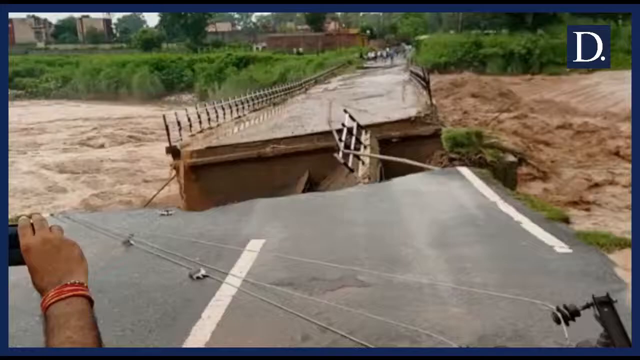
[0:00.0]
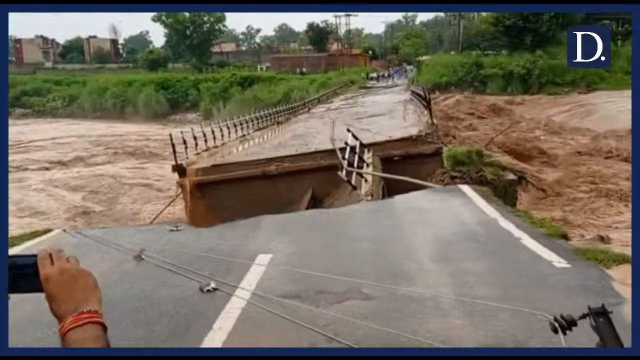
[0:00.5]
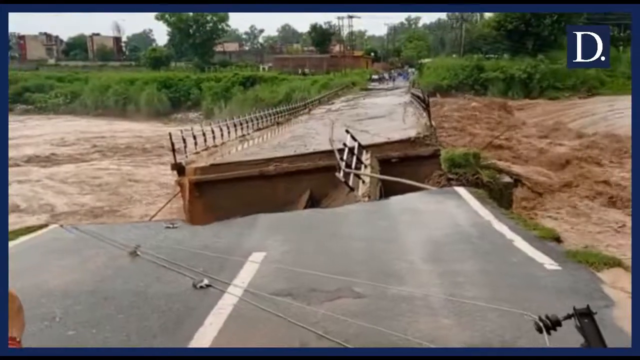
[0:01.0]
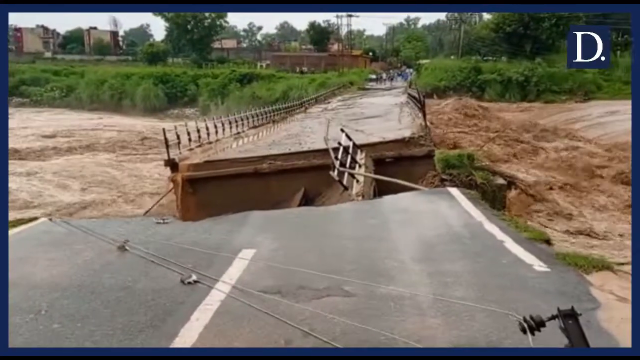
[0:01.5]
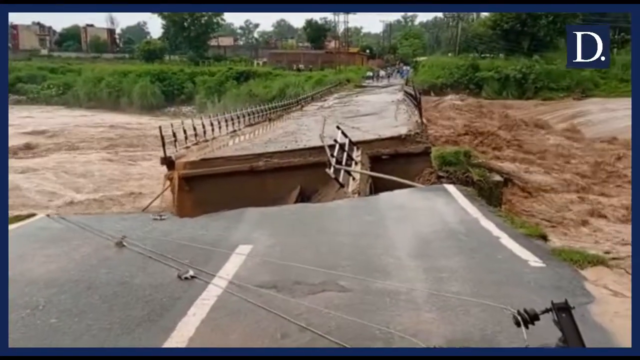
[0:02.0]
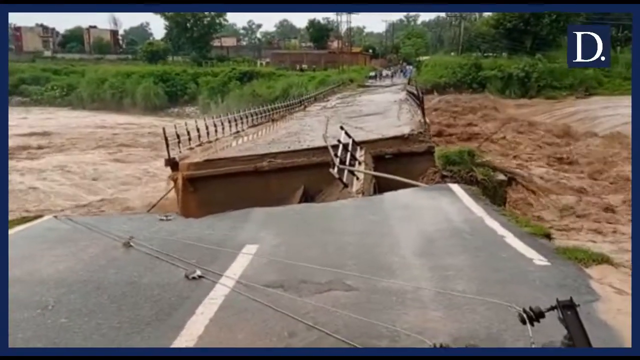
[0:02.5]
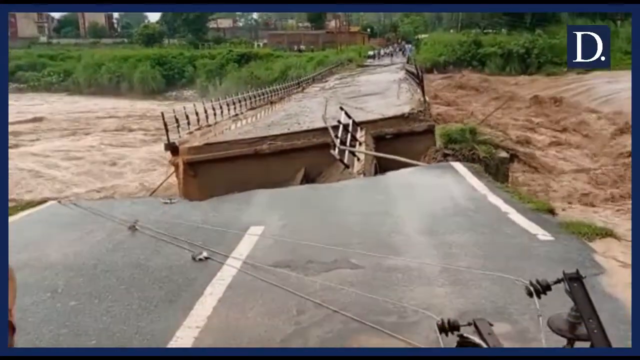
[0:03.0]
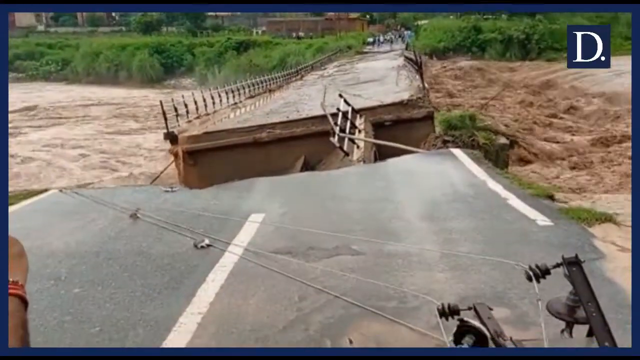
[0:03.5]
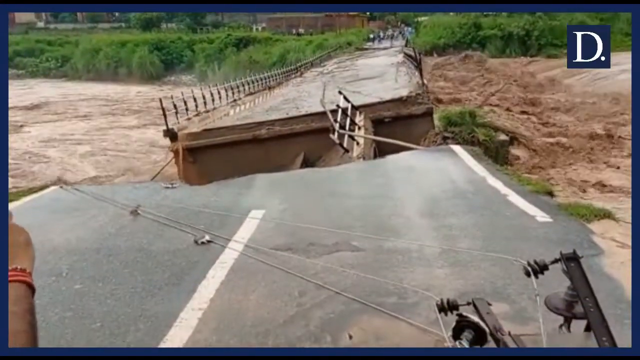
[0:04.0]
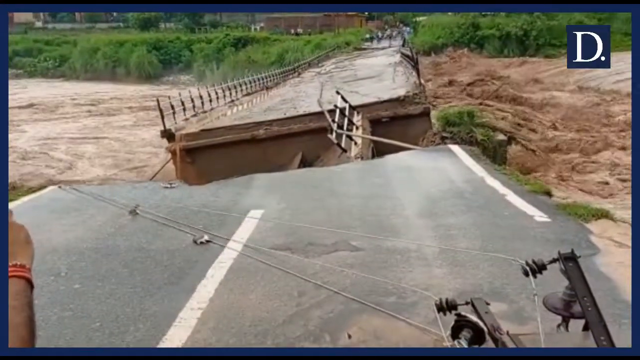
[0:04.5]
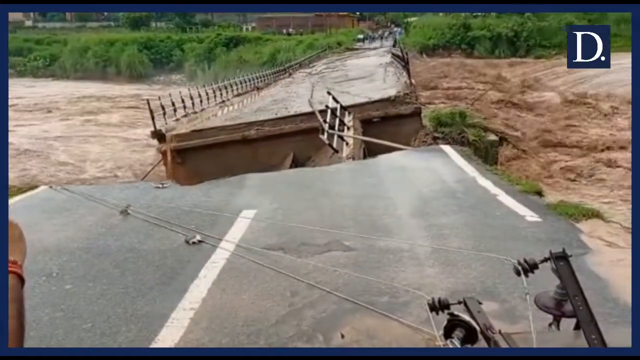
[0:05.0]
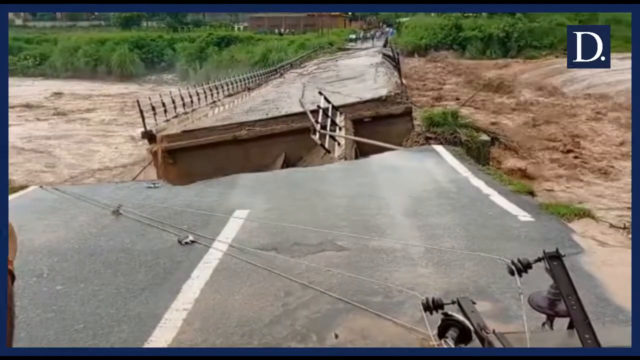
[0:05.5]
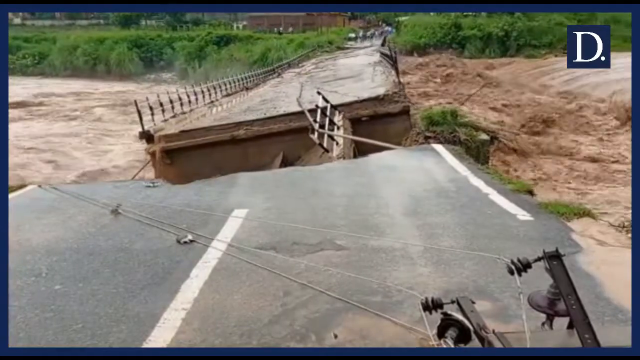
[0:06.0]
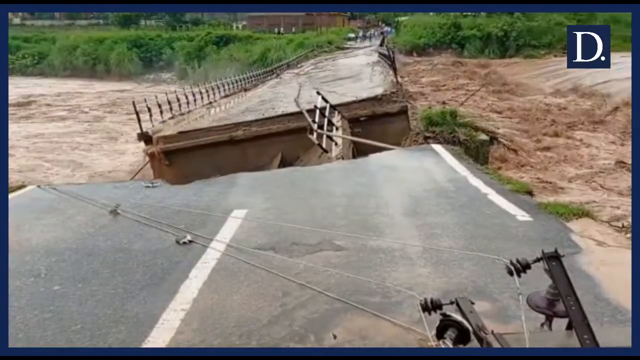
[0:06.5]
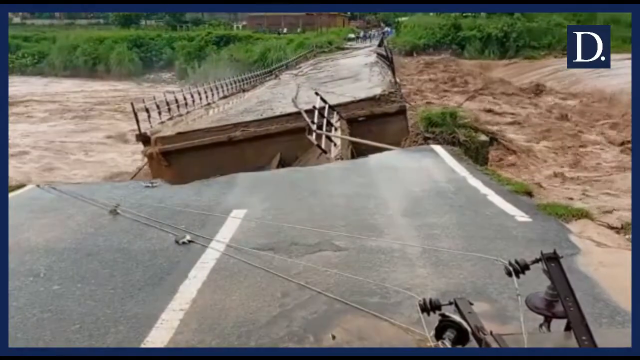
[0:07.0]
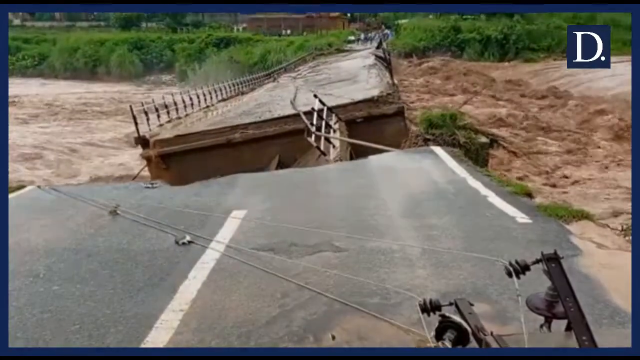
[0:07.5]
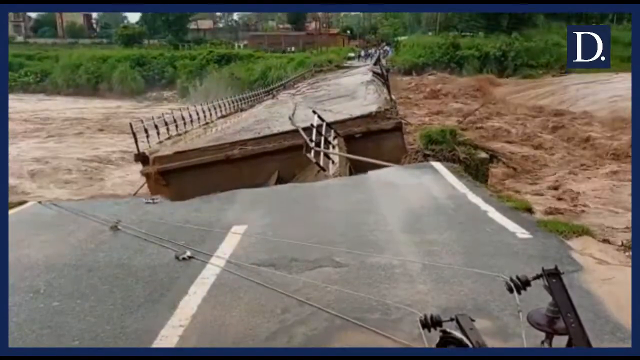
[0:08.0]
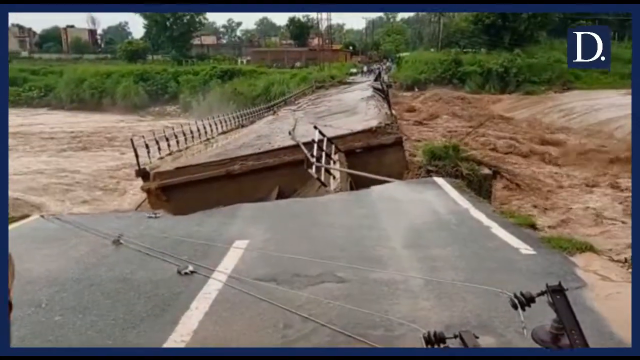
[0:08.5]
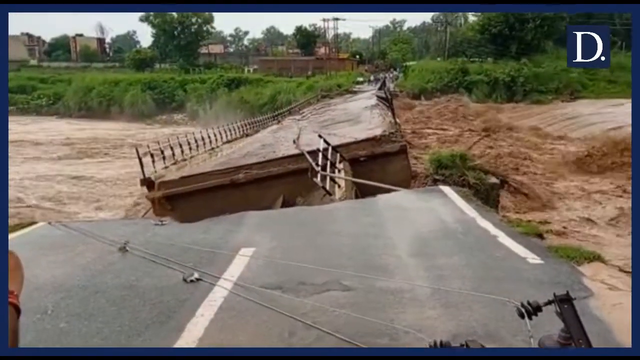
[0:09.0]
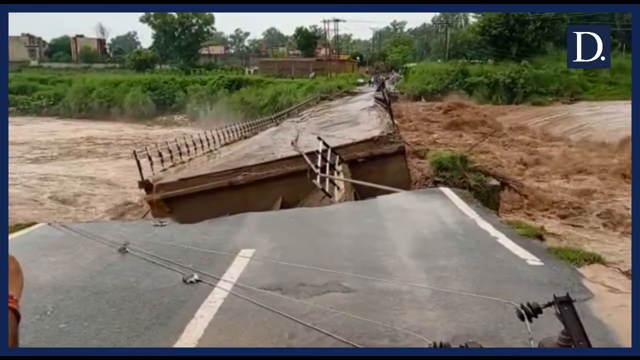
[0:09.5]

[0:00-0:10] A large river is very heavily in flood. On the right side of a bridge the water looks turbulent, fast moving and very brown. The bridge over the river has been severely damaged by the force of the water: the river has split it into two parts with a gap in the middle. People on the far bank look at the damage to the bridge and at the high water level, which is higher on the right side of the bridge than on the left. Eventually the pressure of the water building on the right side forces the bridge at the top of the screen to collapse into the river below.